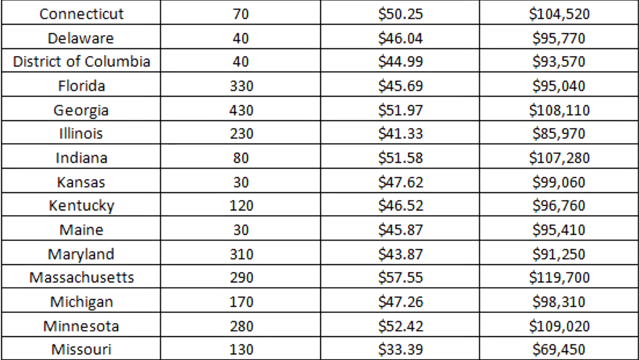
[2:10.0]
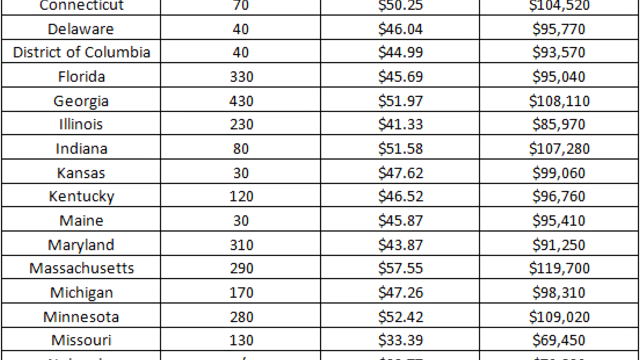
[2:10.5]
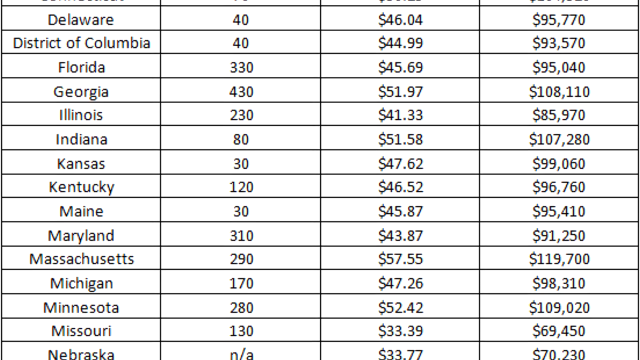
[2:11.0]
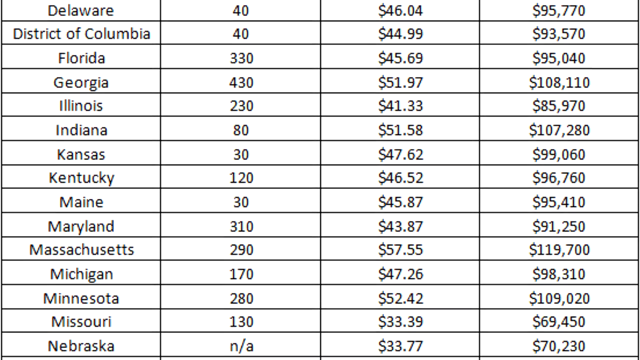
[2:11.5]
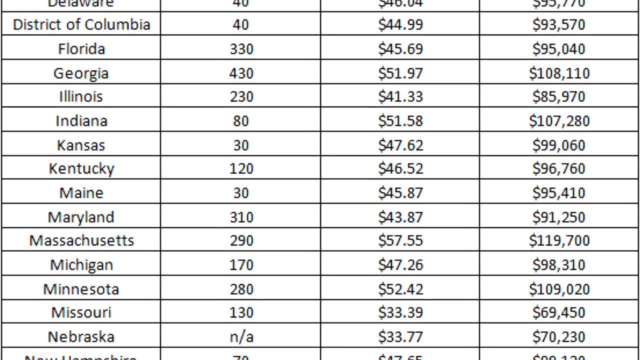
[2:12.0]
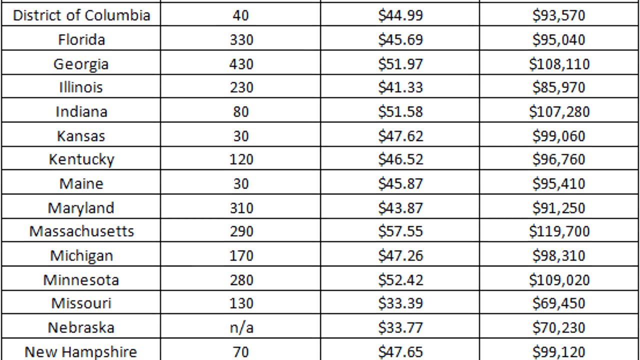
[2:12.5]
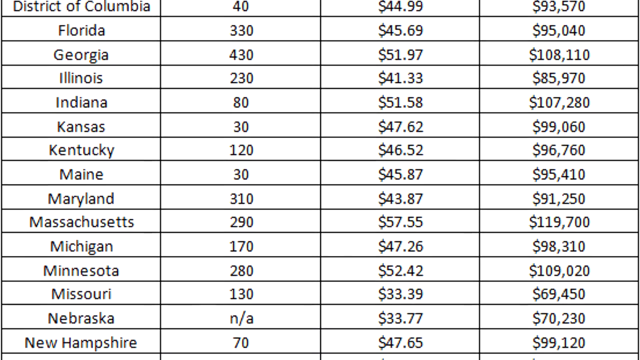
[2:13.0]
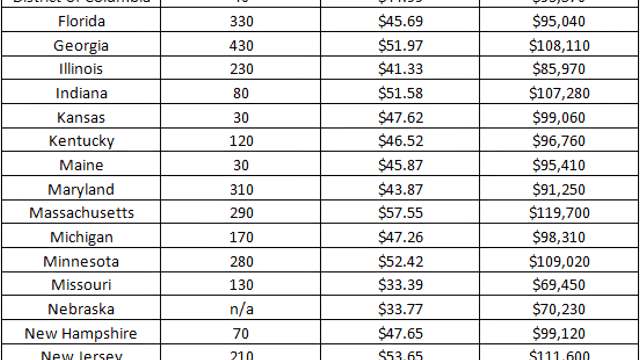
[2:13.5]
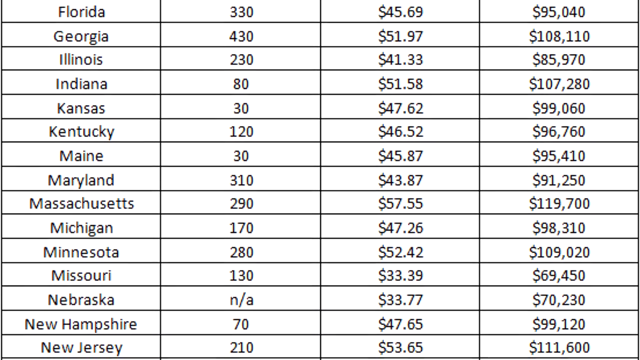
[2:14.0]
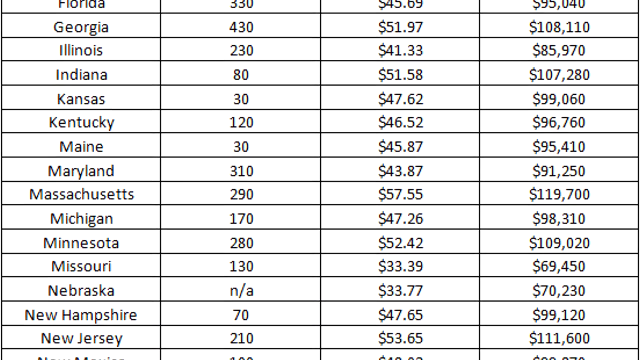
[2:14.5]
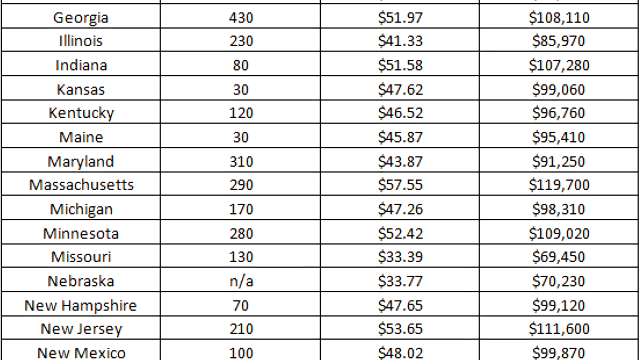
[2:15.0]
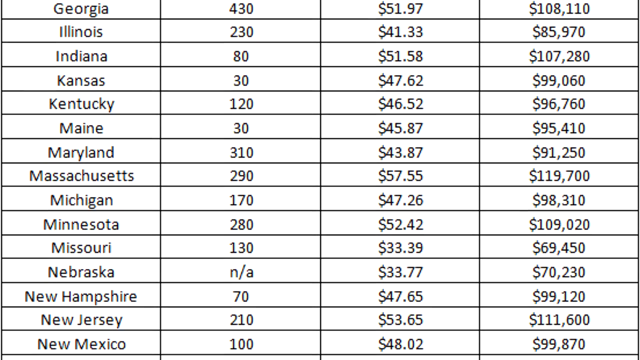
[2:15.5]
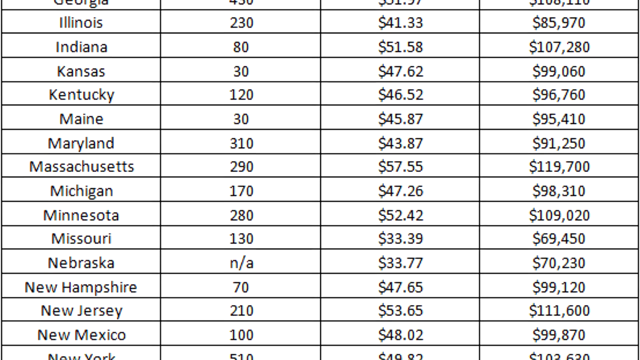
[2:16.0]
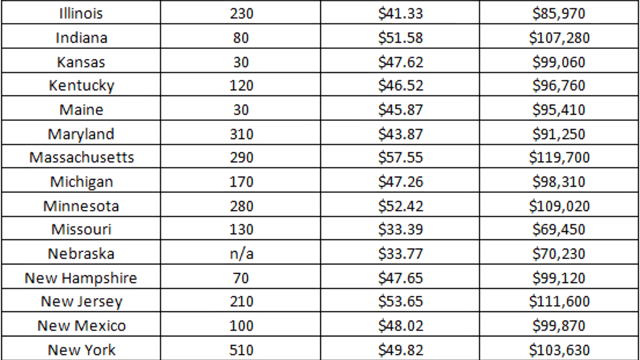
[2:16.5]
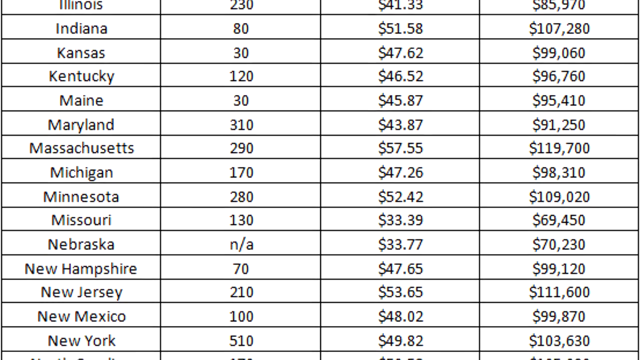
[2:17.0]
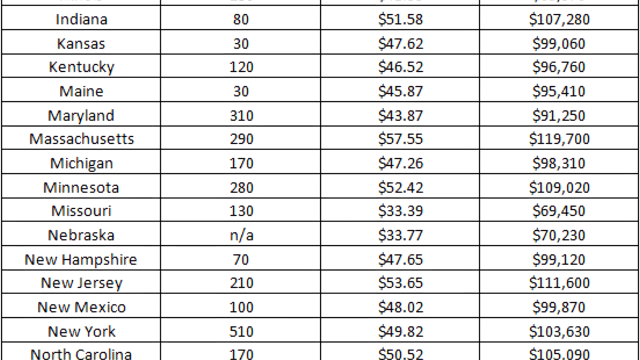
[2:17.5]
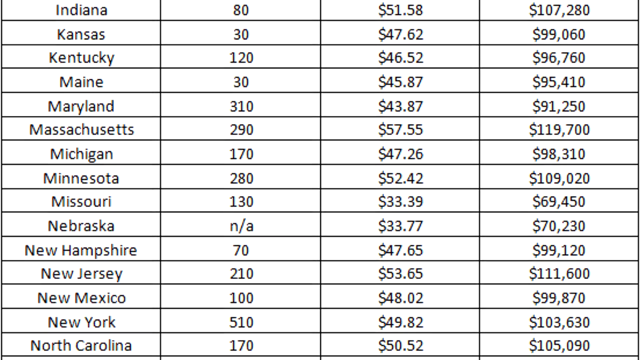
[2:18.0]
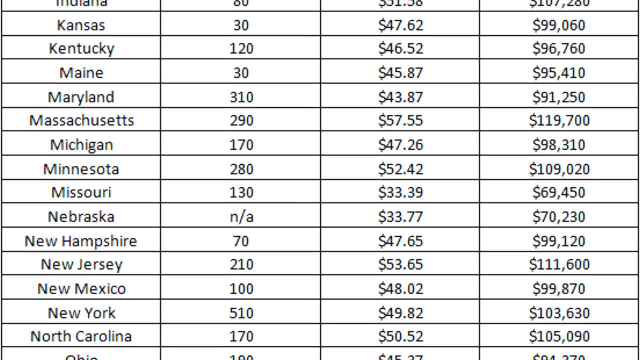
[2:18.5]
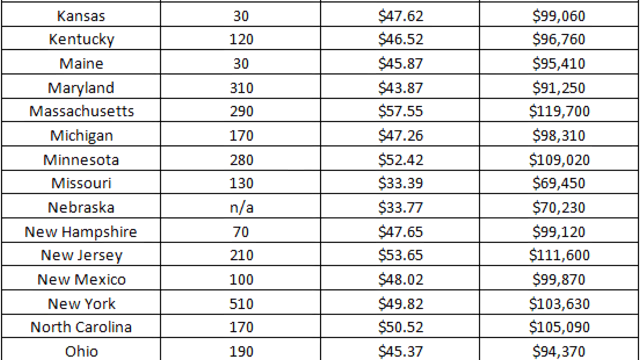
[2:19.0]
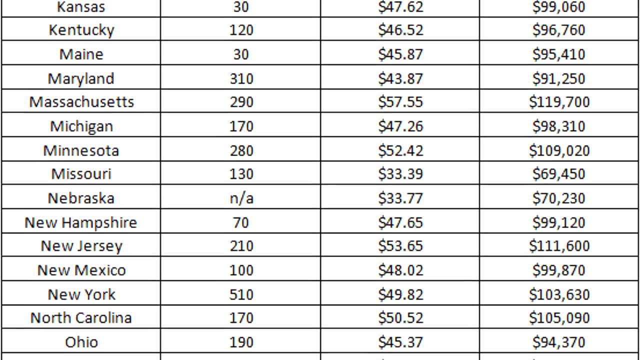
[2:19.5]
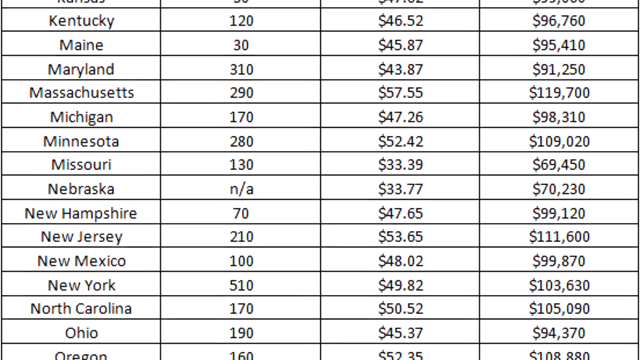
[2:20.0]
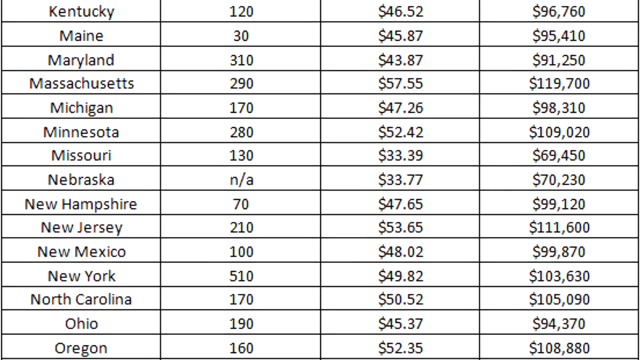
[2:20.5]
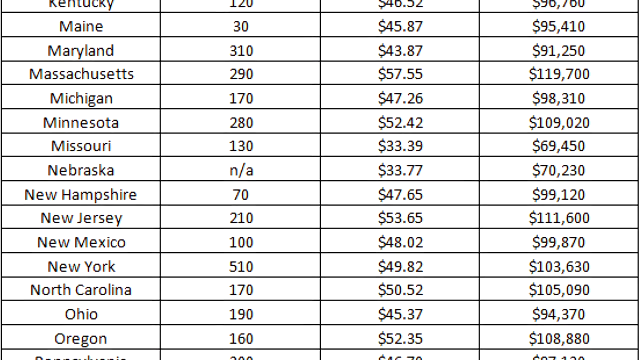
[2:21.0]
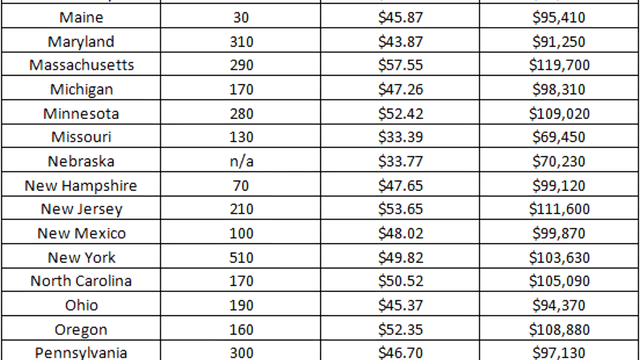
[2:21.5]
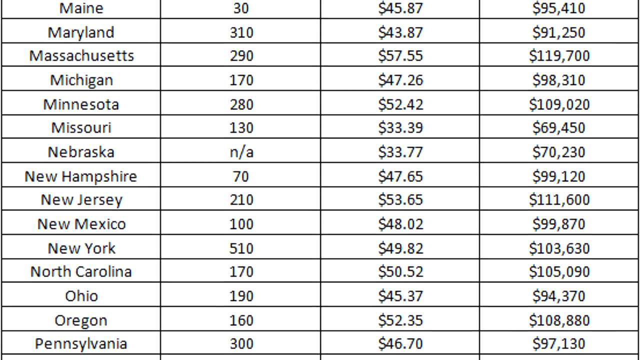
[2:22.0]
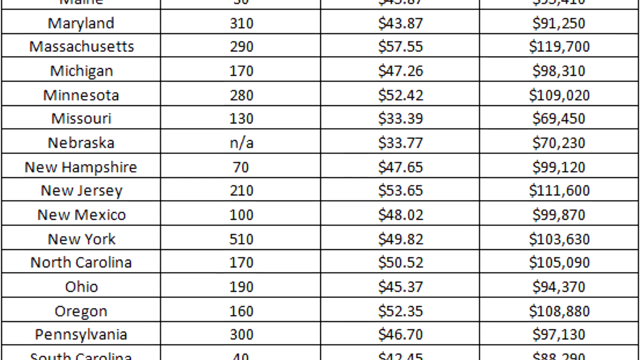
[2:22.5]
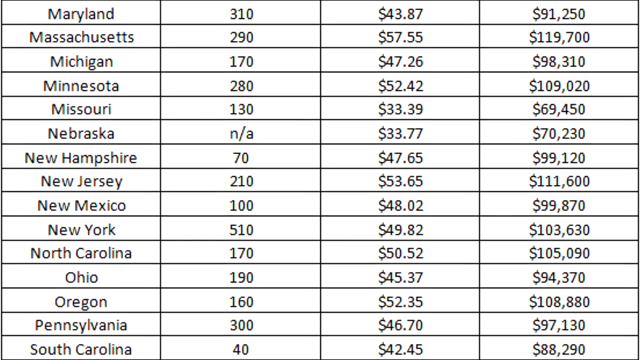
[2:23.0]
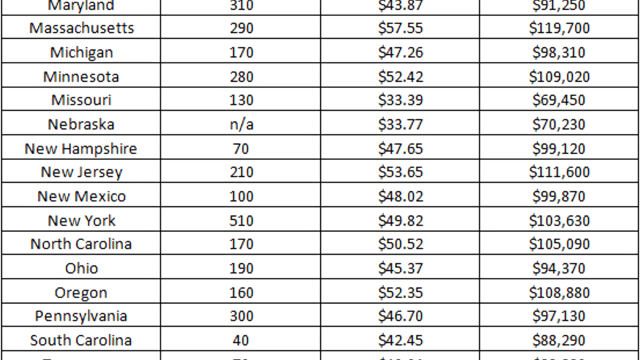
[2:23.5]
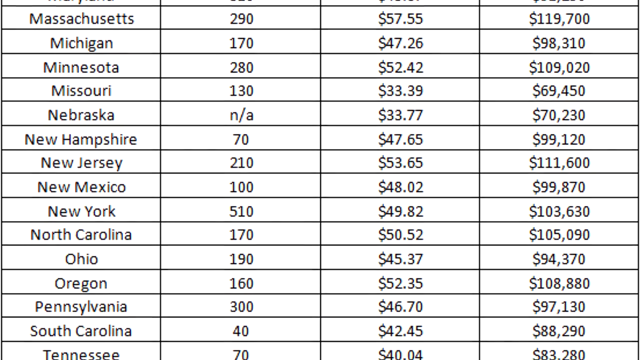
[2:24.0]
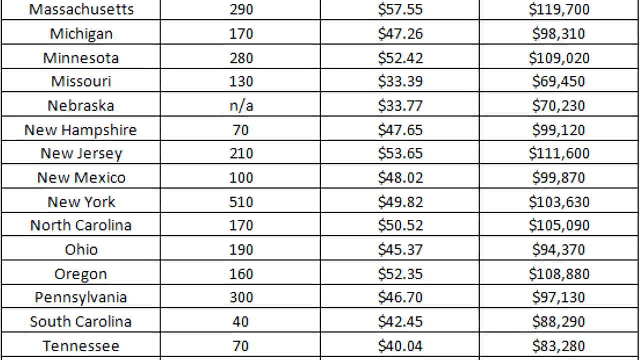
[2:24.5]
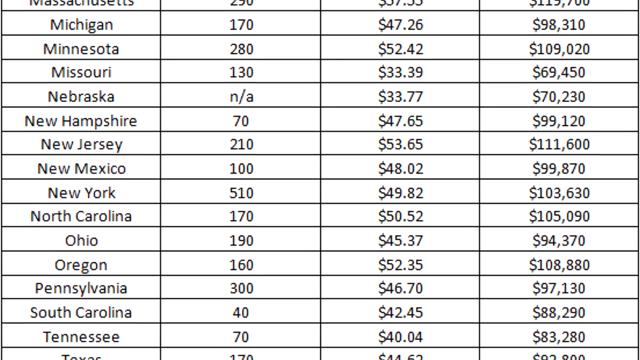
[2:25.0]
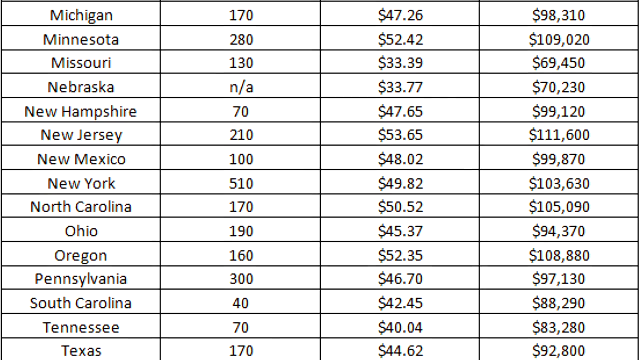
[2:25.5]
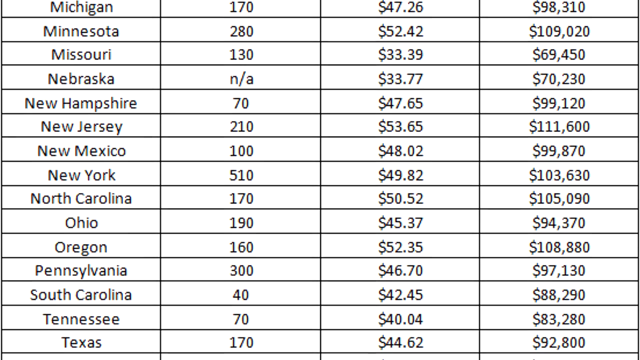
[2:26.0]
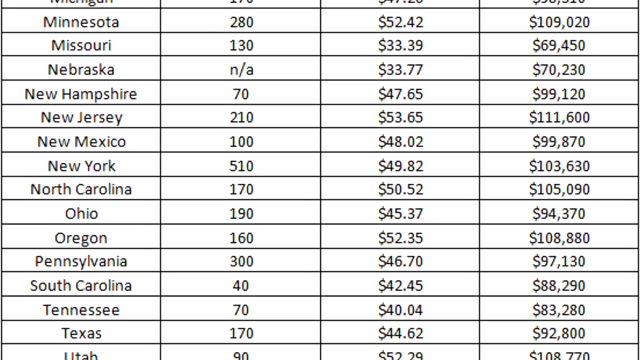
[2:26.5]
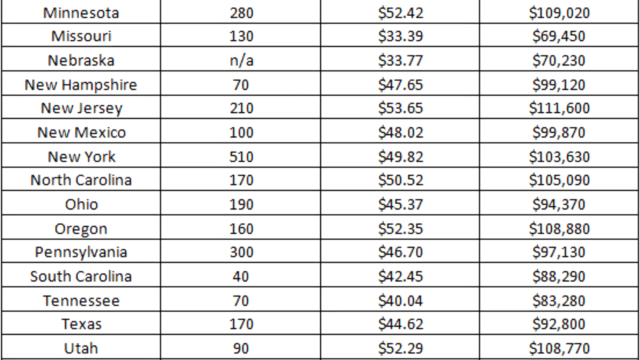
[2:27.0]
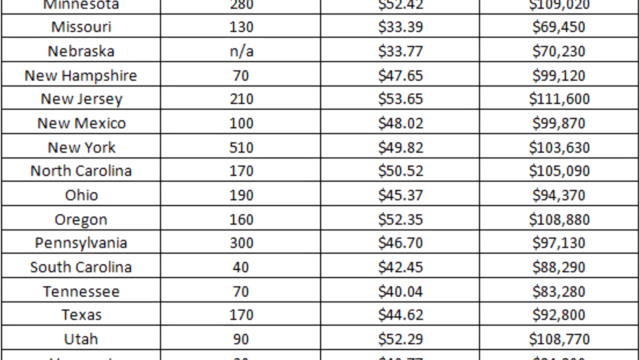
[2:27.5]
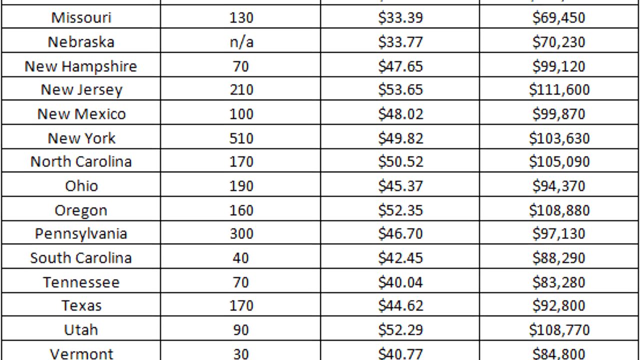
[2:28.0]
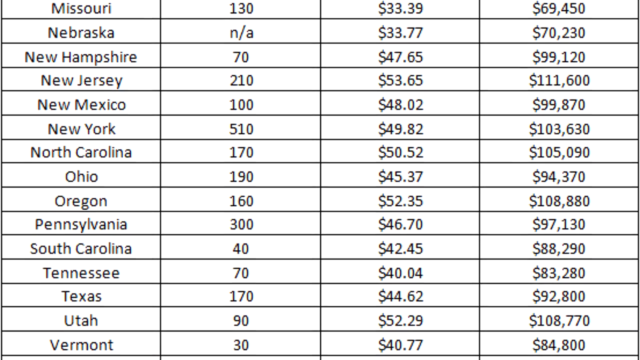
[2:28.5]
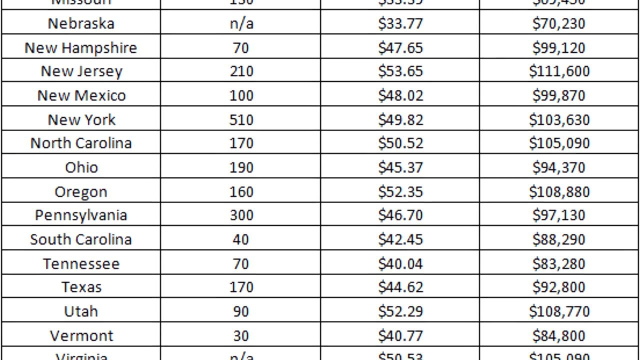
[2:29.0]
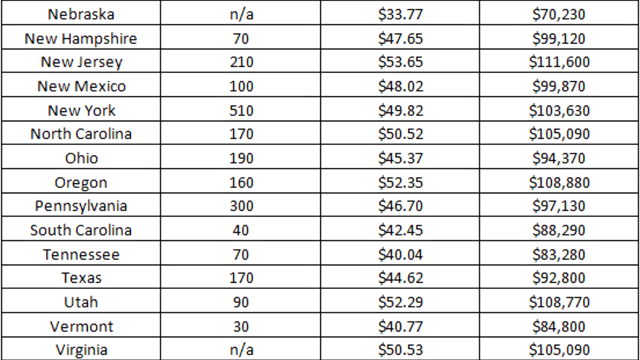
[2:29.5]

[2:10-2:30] The chart of states continues, listing employment numbers, hourly wage and annual wage for nurse midwives. The visible portion starts at Connecticut, with 70, $50.25 and $104,520 annually. Below are Delaware, the District of Columbia, Florida and Georgia; Georgia has 430 midwives with an hourly rate of $51.97, or $108,110. Then come Illinois, Indiana and Kansas, which has only 30 midwives at a rate of $47.62 and $99,060 a year. Kentucky has 120 midwives with a lower wage of $46.52 an hour. Next are Maine, Maryland with 310 midwives, Massachusetts, Michigan, Minnesota and Missouri. Nebraska shows NA, apparently meaning no midwives, with a wage of $33.39 and an annual figure of $70,230. Then come New Hampshire, New Jersey, New Mexico, New York with 510 midwives, North Carolina, Ohio with 190, Pennsylvania with 300, and South Carolina with 40.